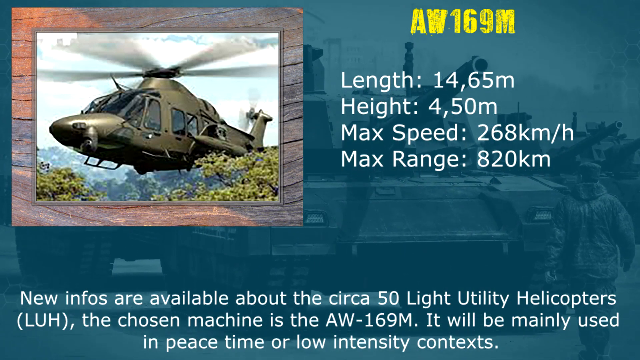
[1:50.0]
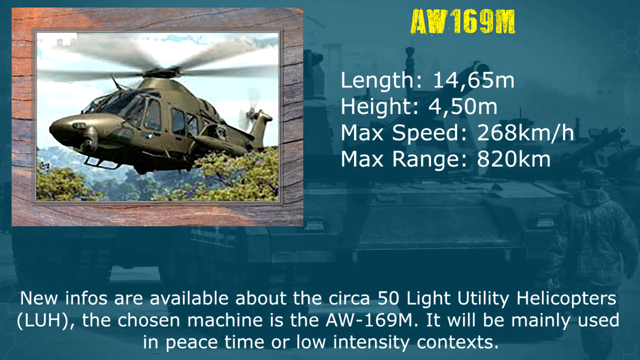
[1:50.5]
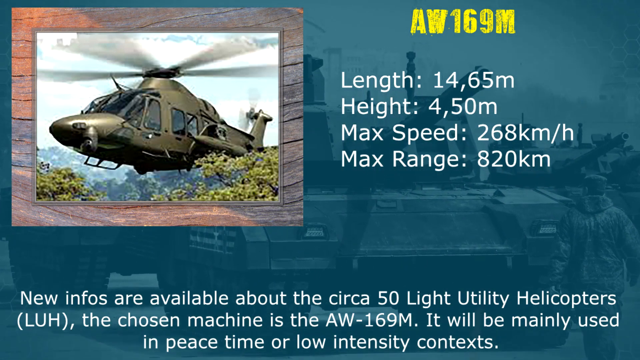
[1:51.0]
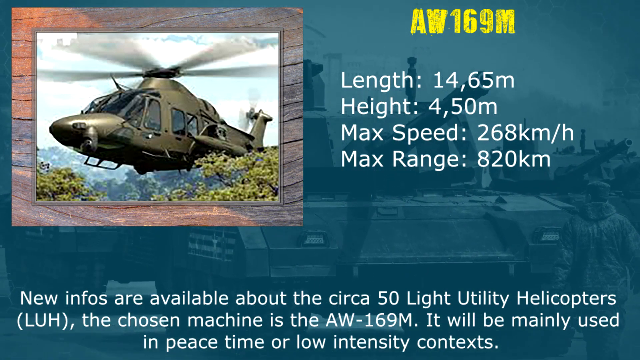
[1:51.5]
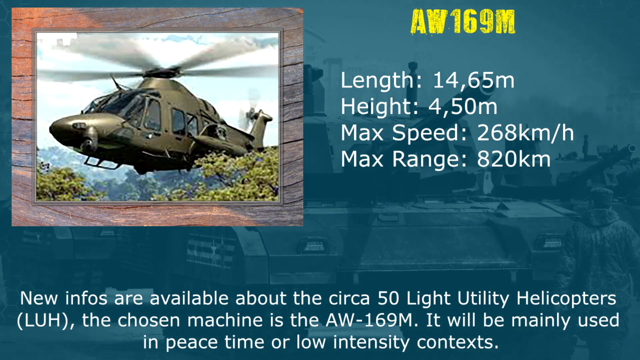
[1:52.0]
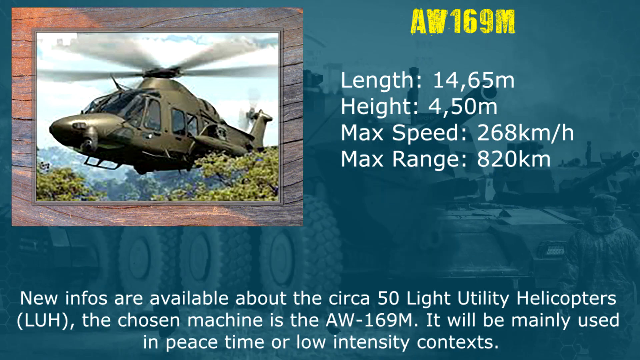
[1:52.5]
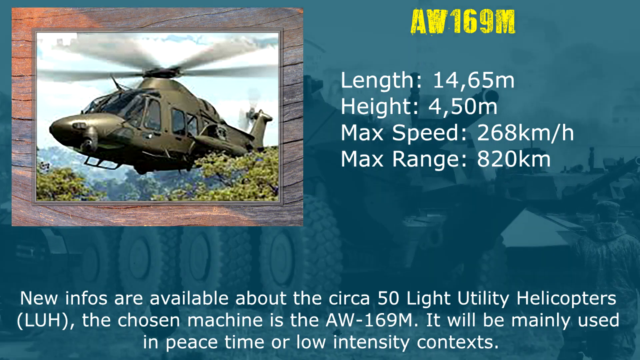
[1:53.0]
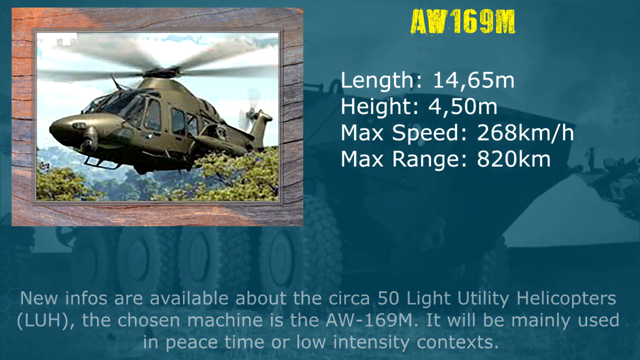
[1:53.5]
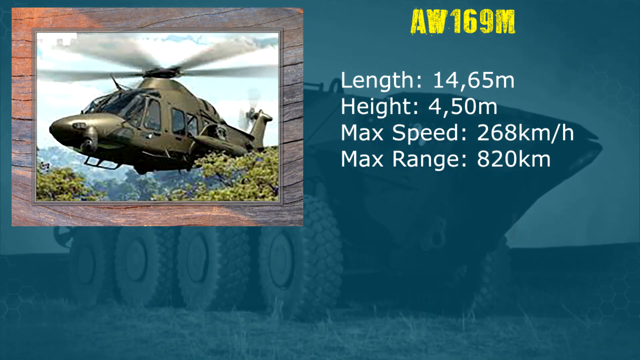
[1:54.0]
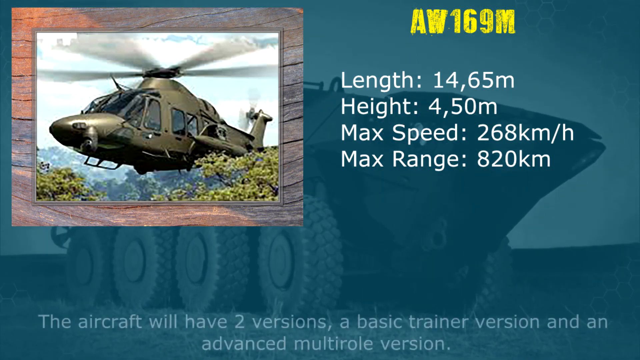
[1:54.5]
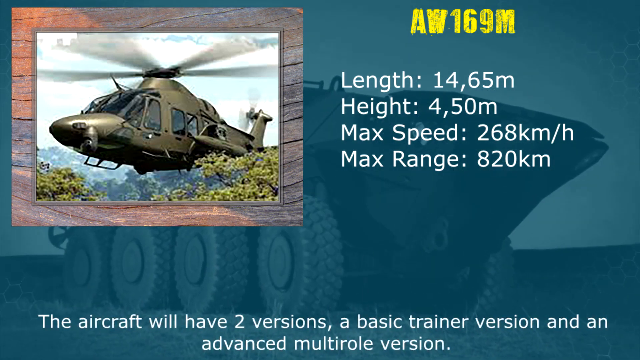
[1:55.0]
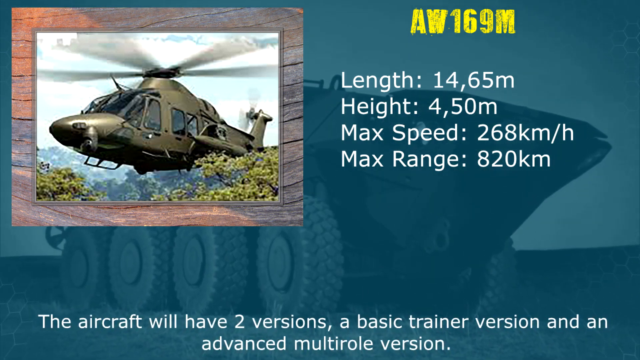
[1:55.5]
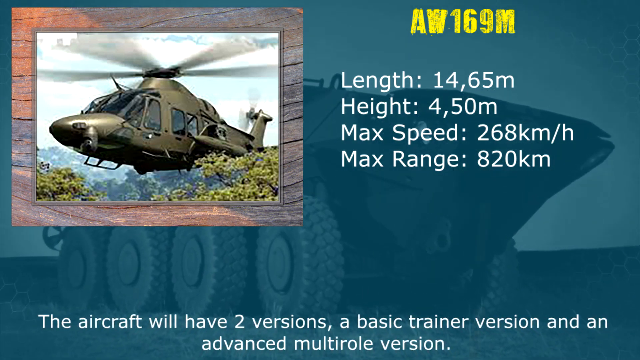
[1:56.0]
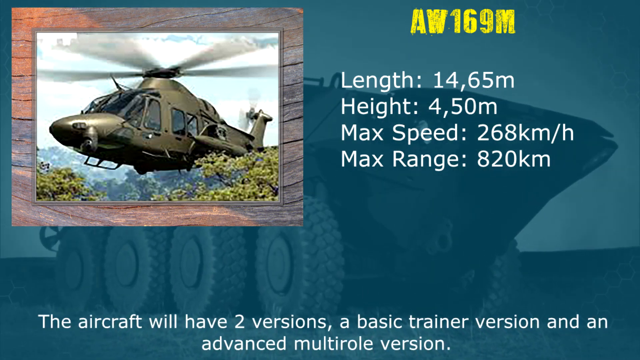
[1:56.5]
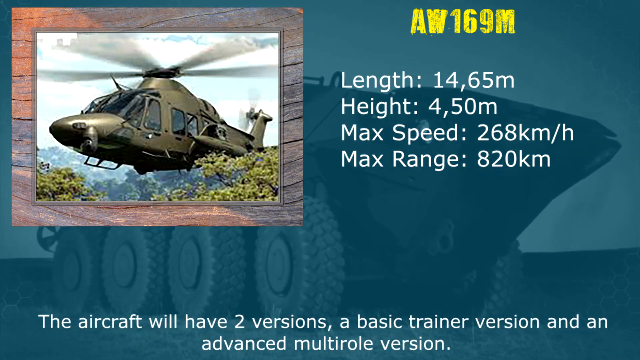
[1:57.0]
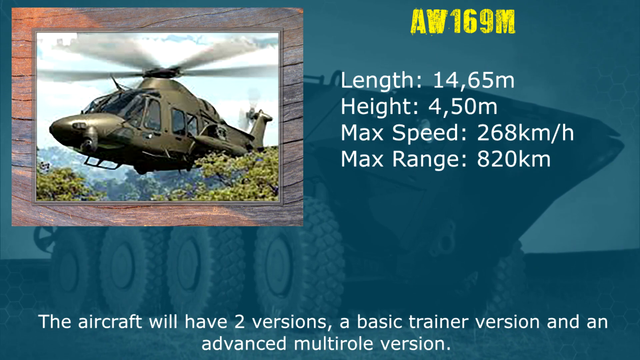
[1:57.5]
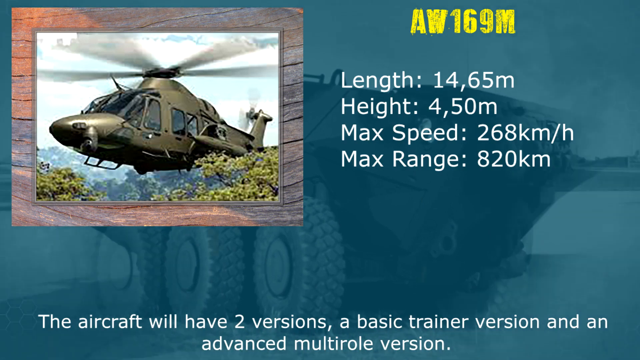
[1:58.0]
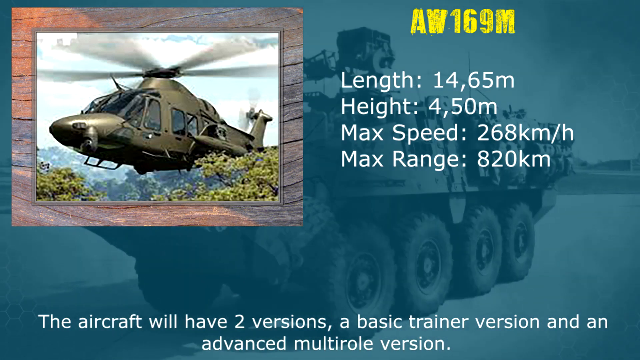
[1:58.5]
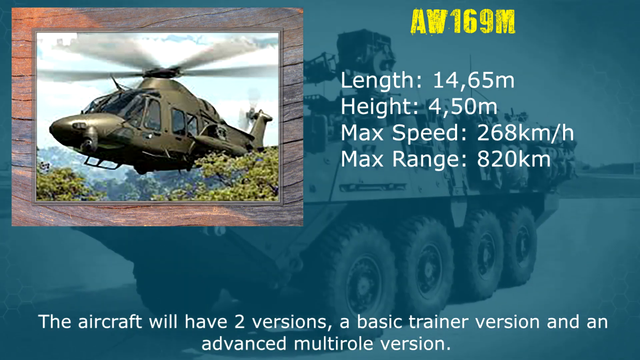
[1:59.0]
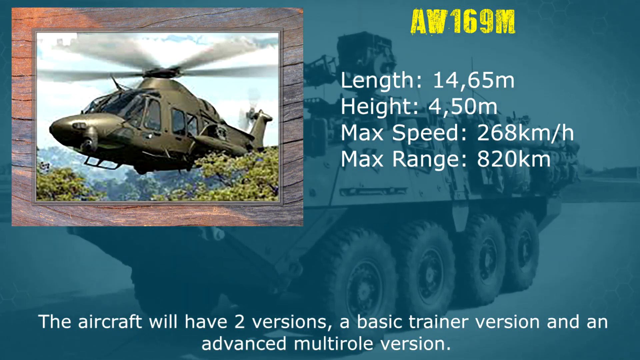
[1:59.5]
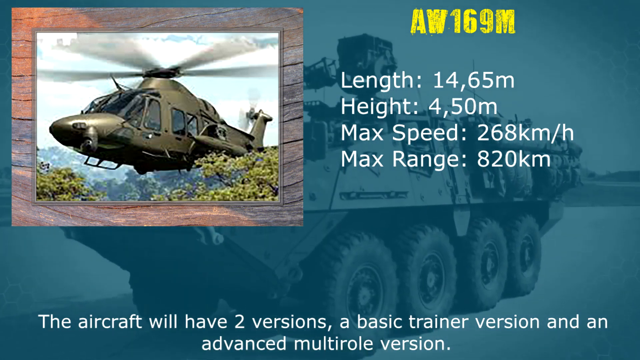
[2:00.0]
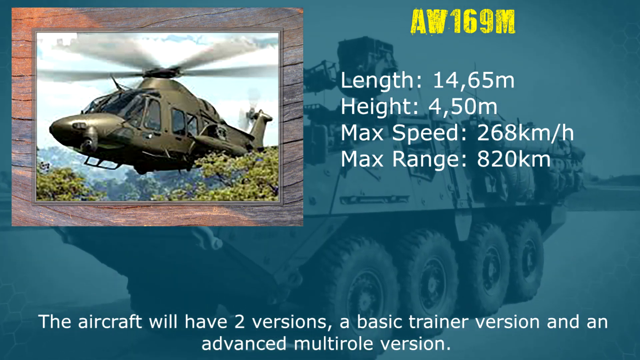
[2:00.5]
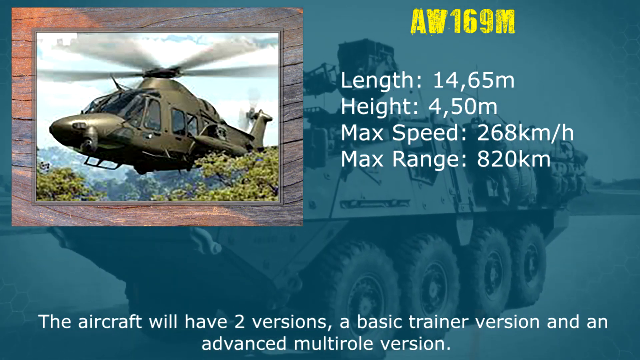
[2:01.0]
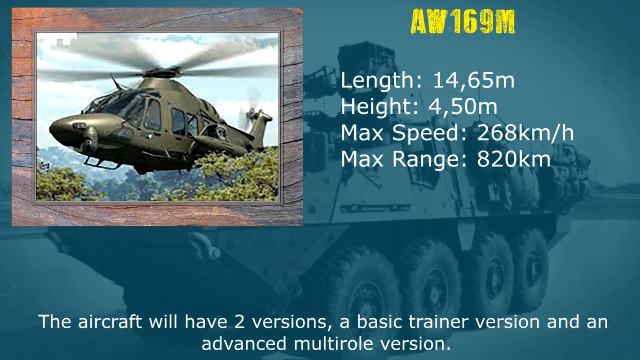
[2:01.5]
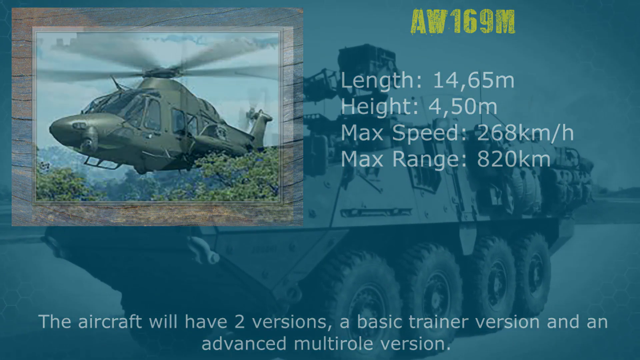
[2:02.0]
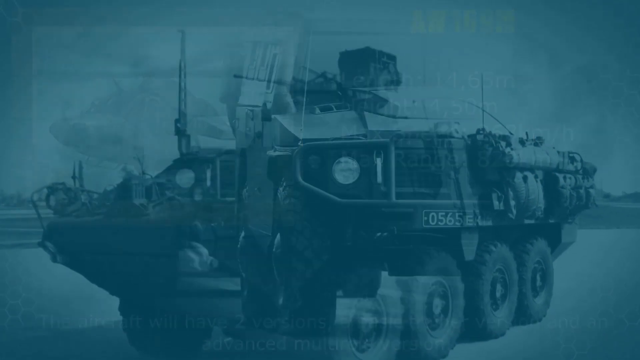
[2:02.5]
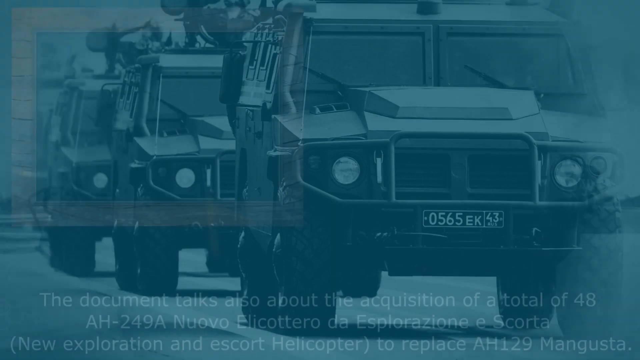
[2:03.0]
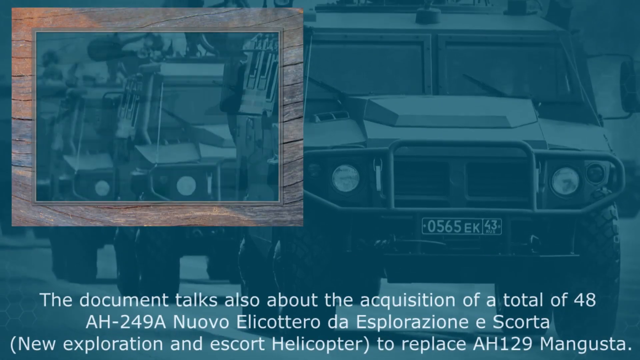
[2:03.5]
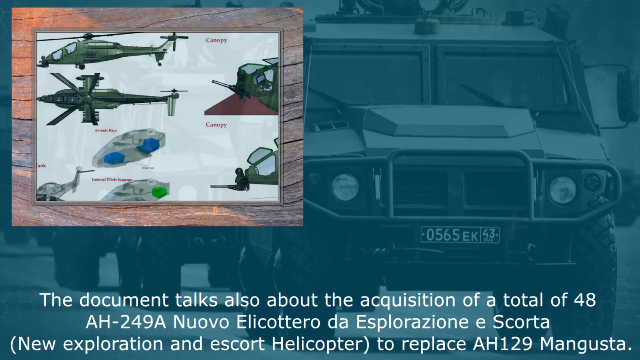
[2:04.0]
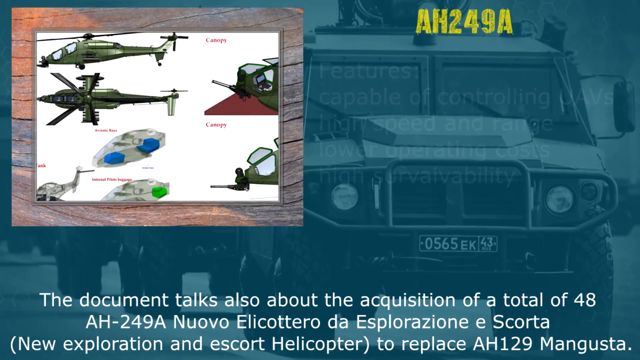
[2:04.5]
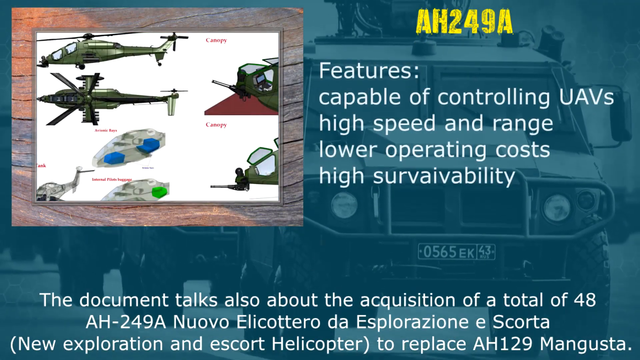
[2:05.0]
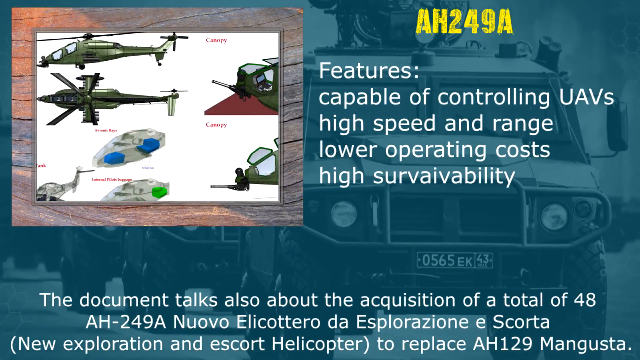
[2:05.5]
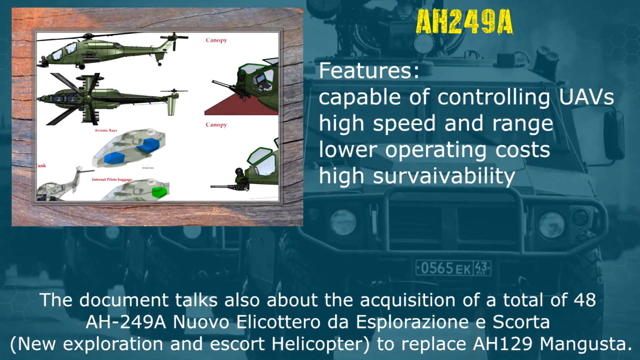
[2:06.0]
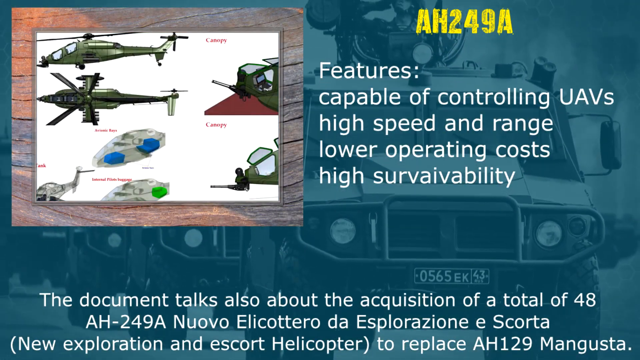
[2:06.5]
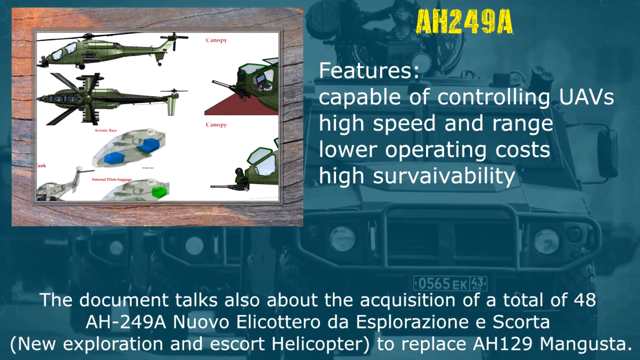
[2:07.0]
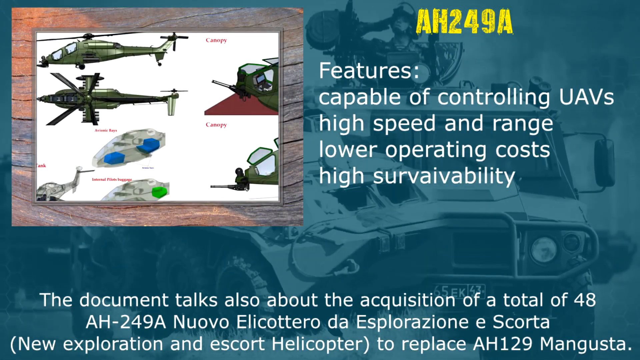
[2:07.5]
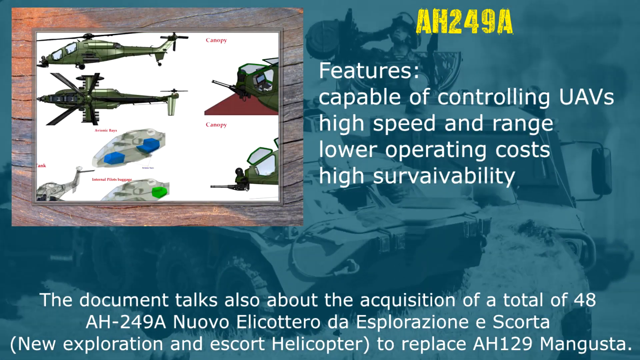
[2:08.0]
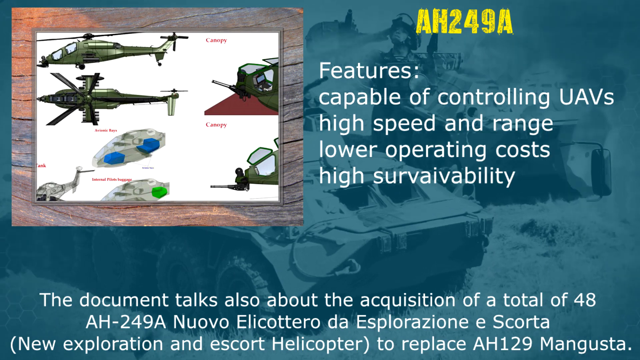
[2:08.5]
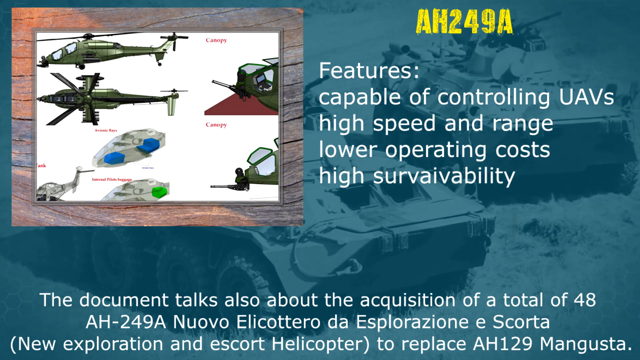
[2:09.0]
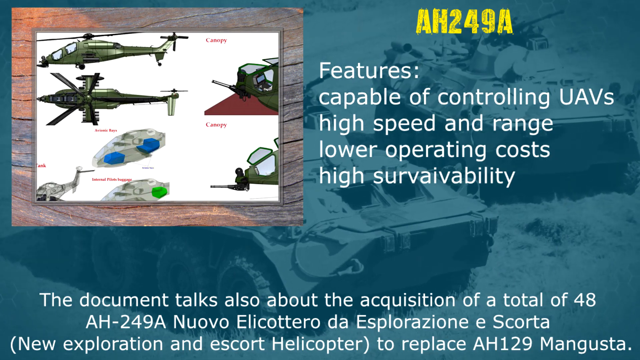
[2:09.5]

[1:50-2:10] A blue background changes through different types of what appears to be army equipment. A square box on the upper left side holds a picture of an army helicopter flying over some trees. In the upper right corner, yellow writing says "AW169M", followed by a list of length, height, max speed and max range with items beside them. White writing at the bottom of the screen gives more information. The background slowly changes through different types of tanks and army equipment. The box on the upper left side then changes to what appear to be different types of helicopters, and the upper right now shows "AH249A" in yellow, followed by "features capable of controlling UAVs, high speed and range, lower operating cost, high survivability".